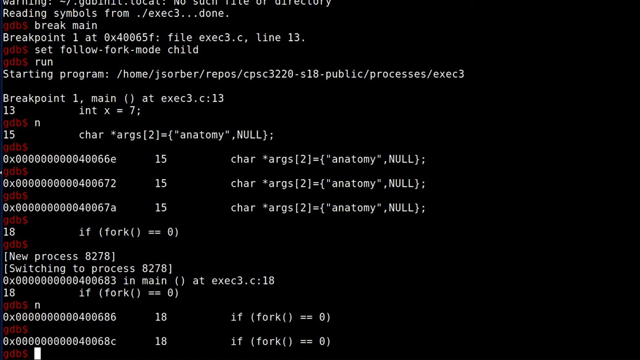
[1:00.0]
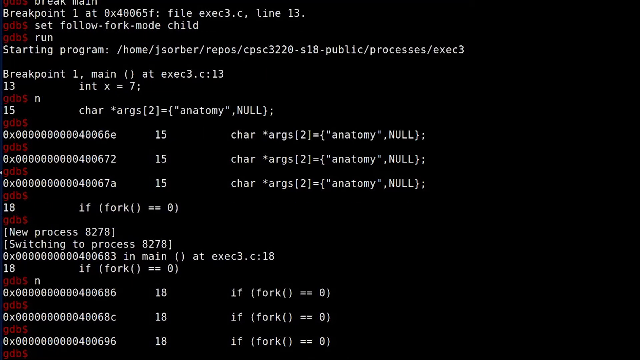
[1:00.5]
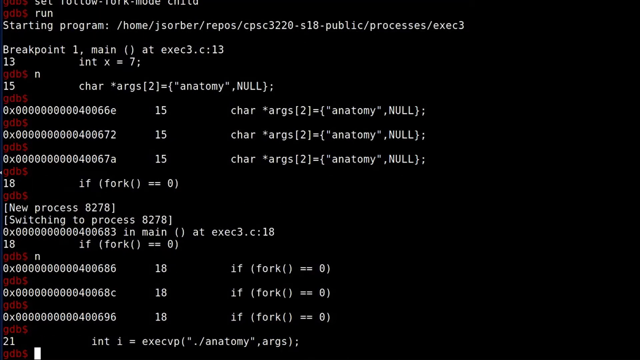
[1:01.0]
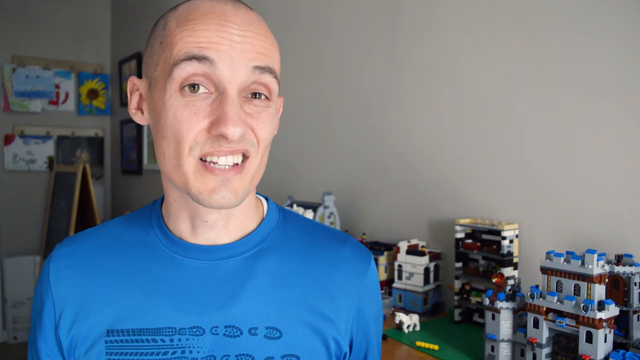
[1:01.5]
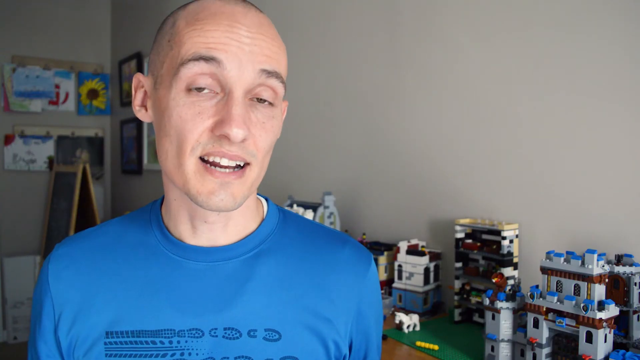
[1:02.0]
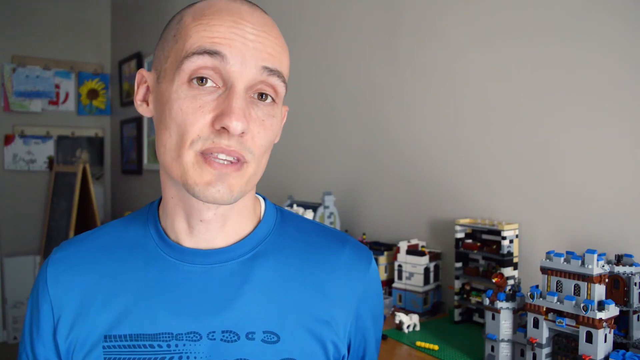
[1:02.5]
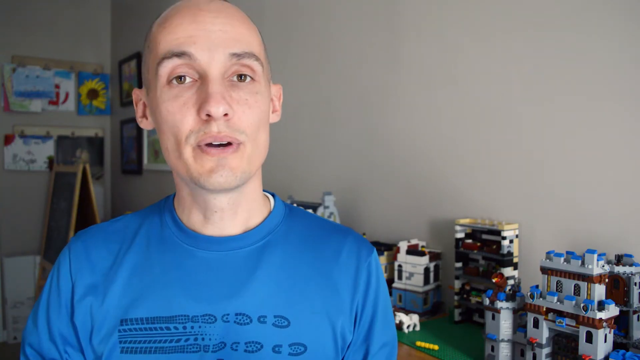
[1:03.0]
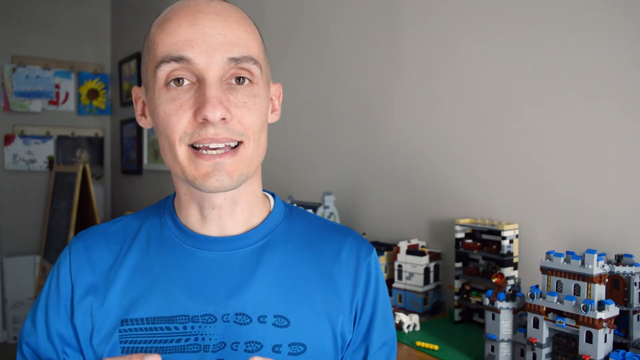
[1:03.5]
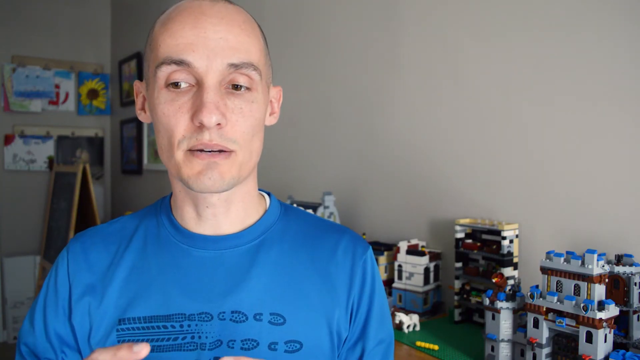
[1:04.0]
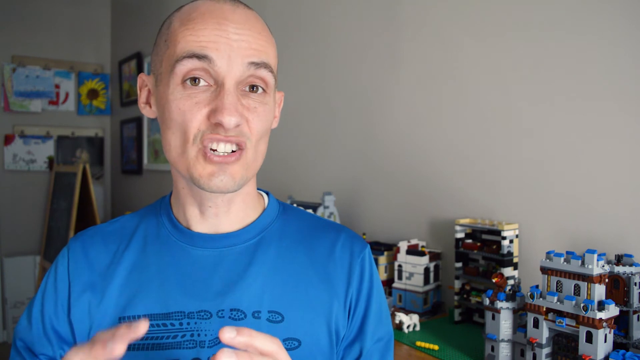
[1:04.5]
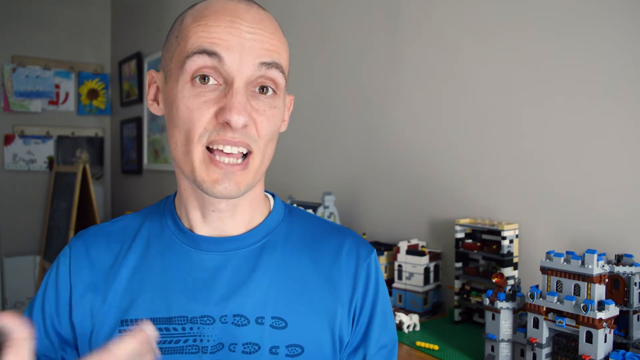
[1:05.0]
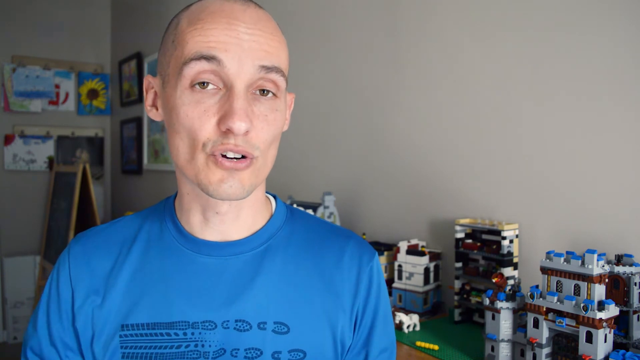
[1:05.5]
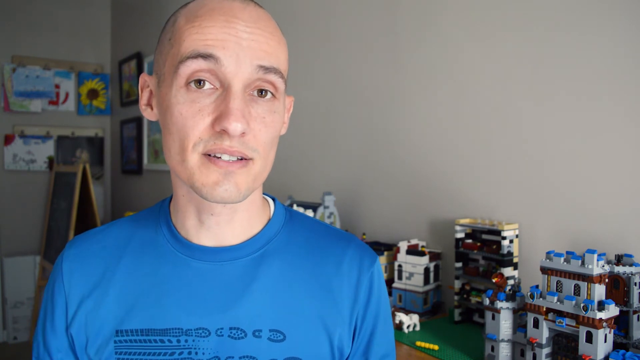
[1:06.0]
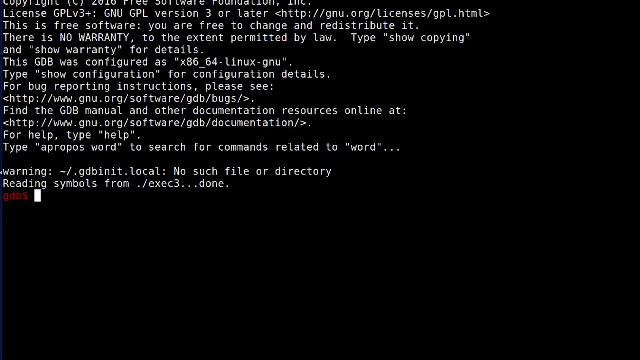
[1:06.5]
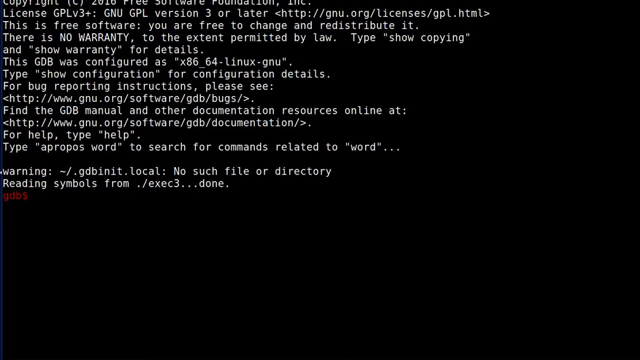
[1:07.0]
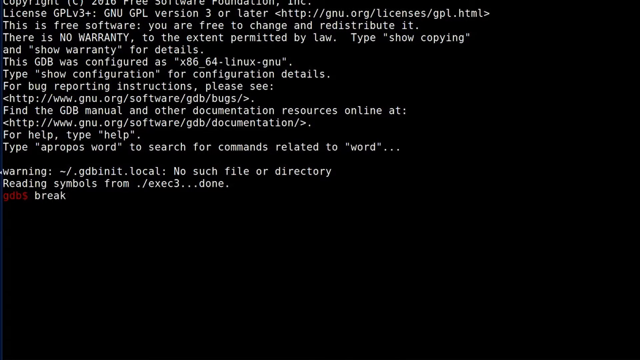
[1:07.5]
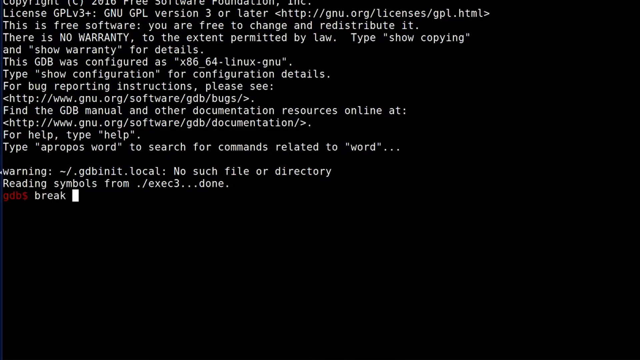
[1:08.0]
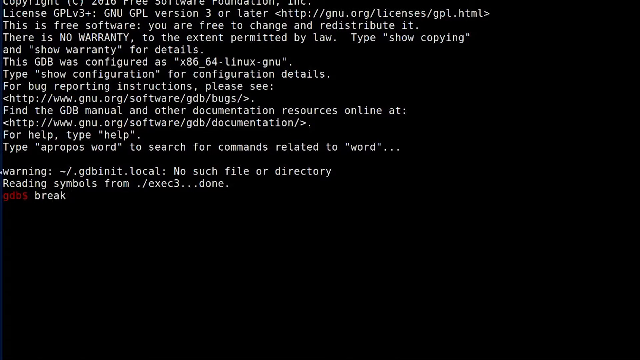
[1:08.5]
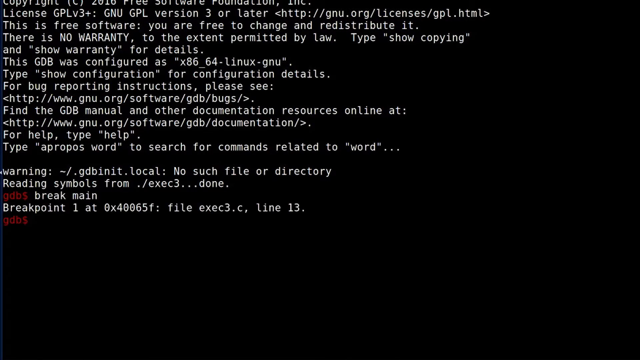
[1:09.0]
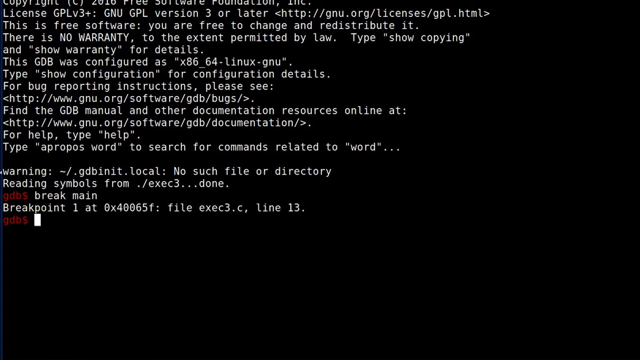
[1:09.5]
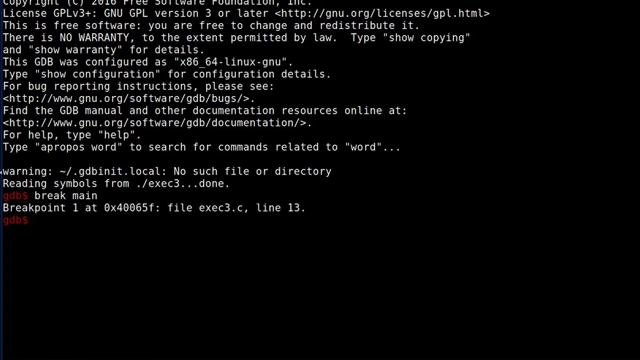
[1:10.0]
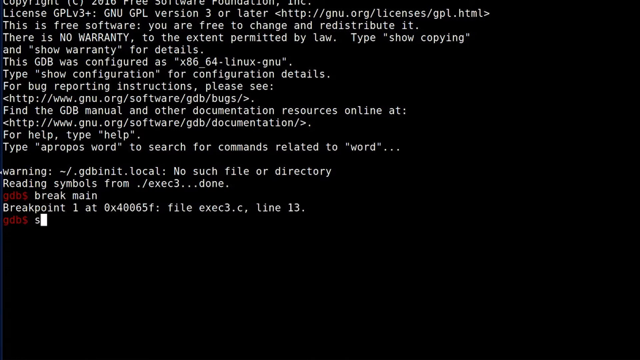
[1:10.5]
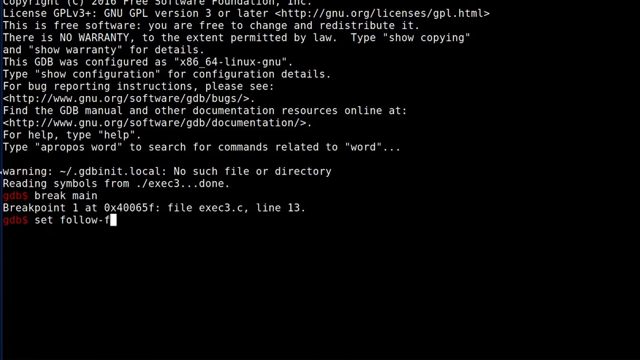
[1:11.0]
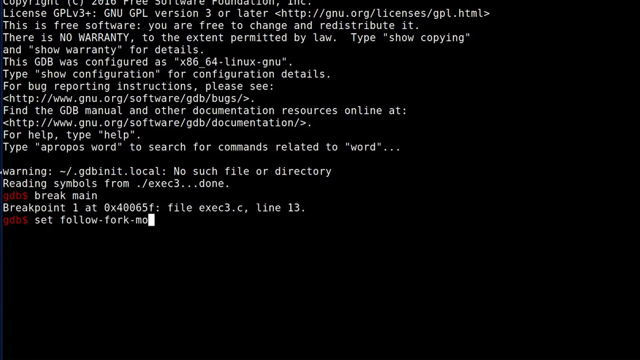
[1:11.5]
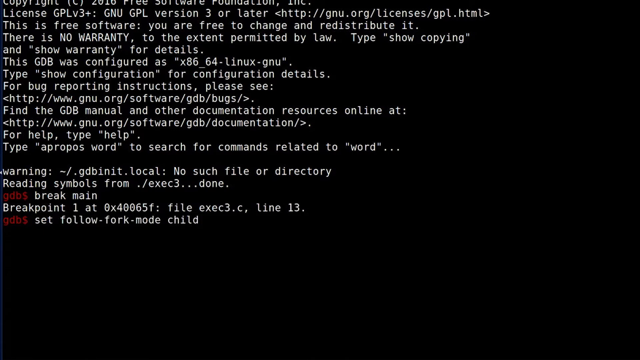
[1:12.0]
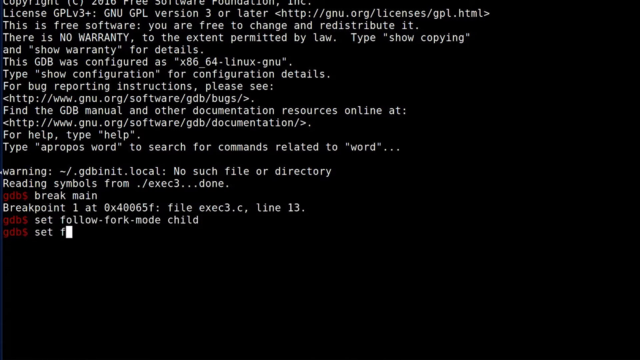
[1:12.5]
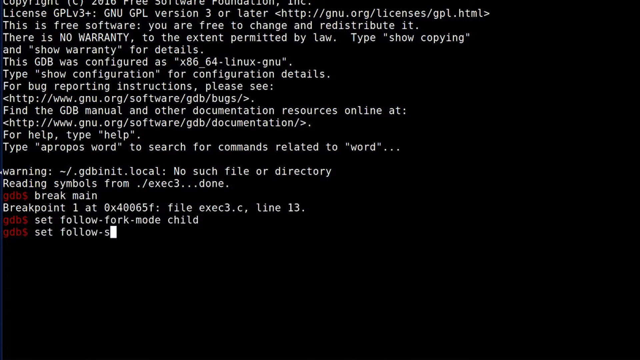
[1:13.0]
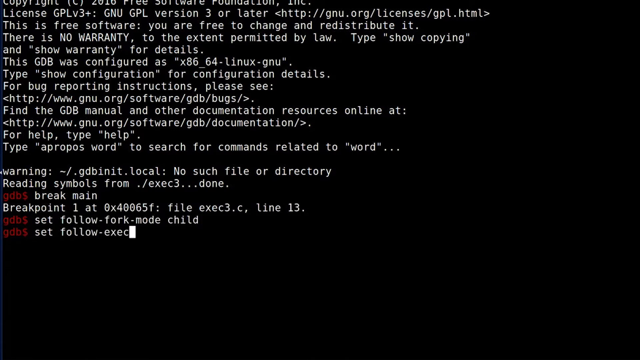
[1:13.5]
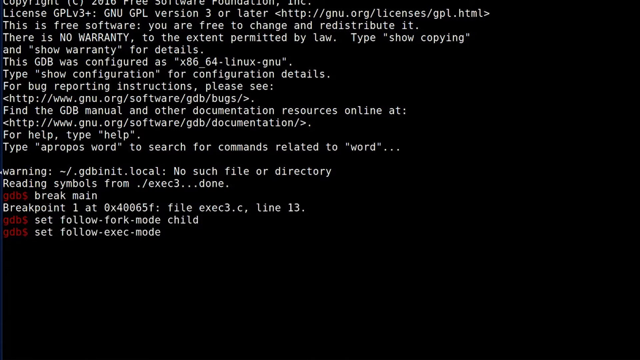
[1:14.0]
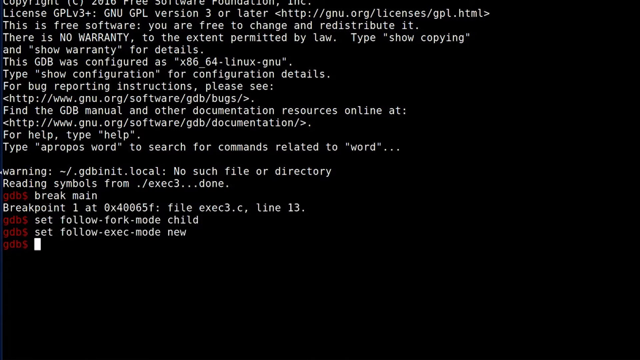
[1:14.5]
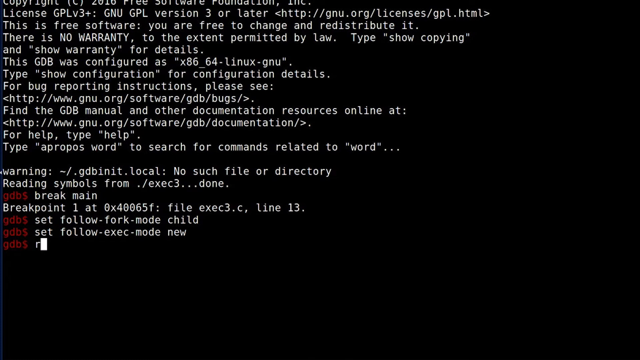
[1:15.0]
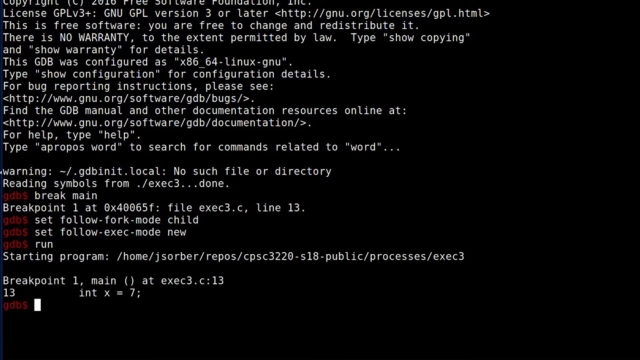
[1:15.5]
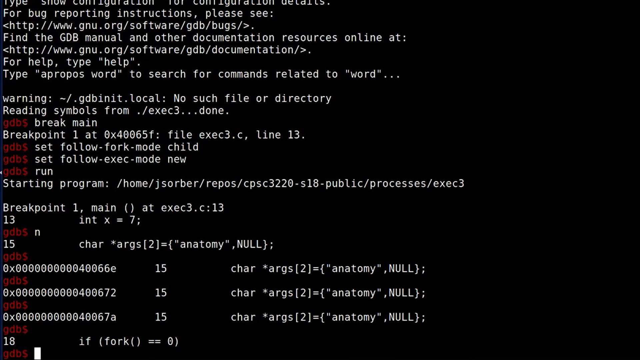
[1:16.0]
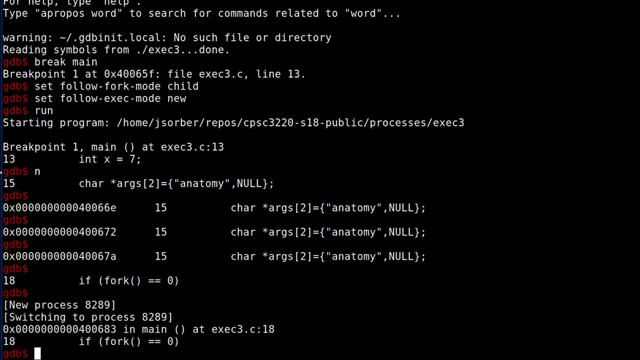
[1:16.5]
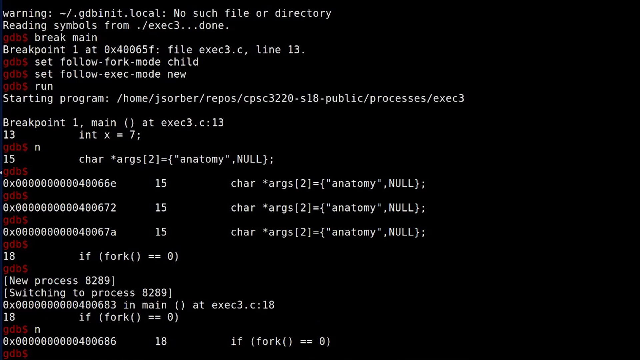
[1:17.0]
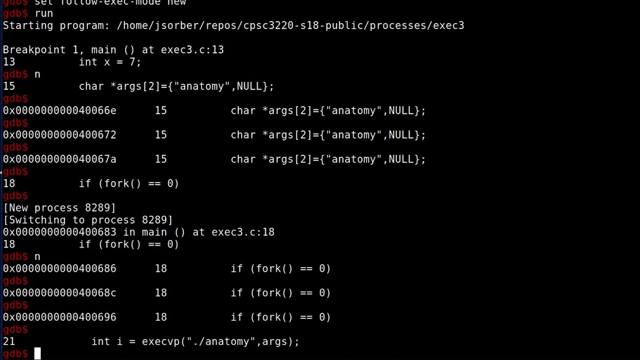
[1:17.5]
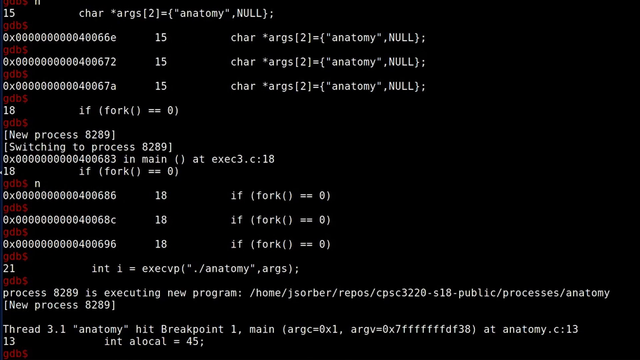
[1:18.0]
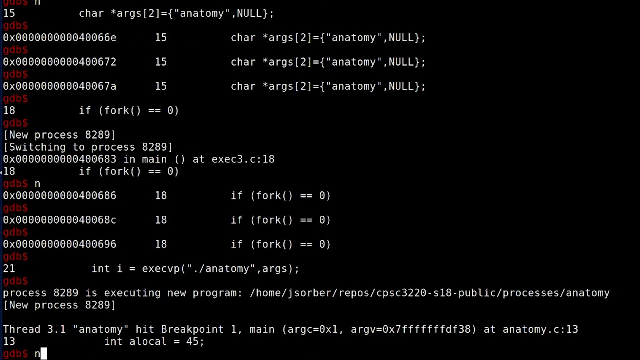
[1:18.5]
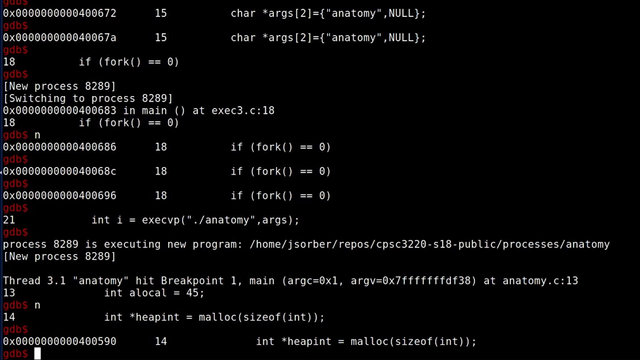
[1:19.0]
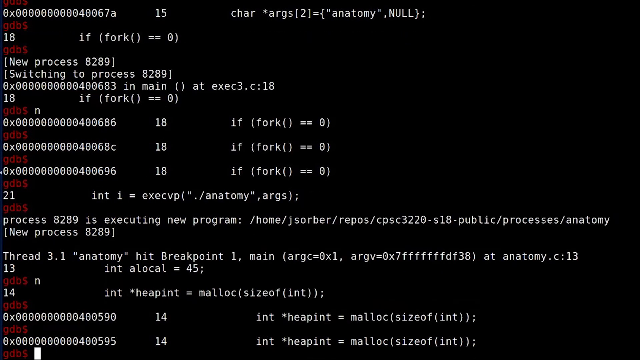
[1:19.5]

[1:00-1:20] A white man wearing a blue shirt is the main subject. Behind him a few pictures hang on the wall, and something that looks like a blackboard is on the left side of the background. On the right, Lego bars have been used to create house-like structures sitting on the table. The topic appears on screen: "debugging C programs that use fork and exec in GDB". The man seems to be explaining coding concepts. On the right side, a GIF-like image appears reading "clones!", and as he continues, another appears reading "zombie processes!". Then a coding interface appears, where the man is seen typing "break main", and a line of code runs. After that he types "run", and the program runs.